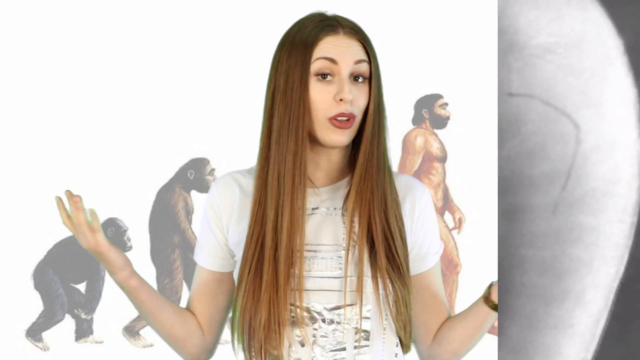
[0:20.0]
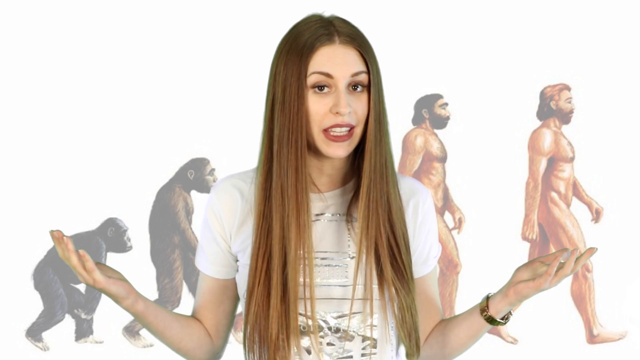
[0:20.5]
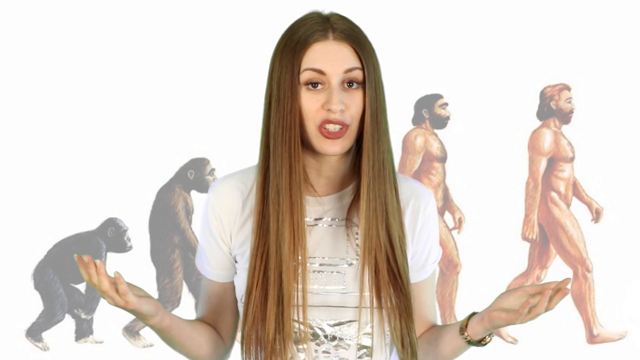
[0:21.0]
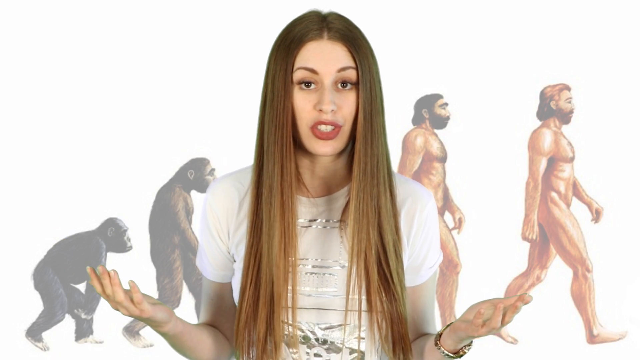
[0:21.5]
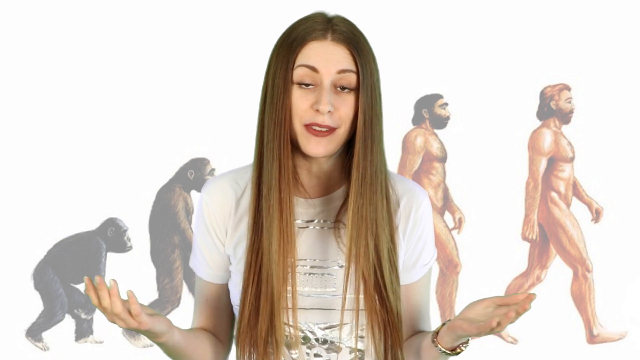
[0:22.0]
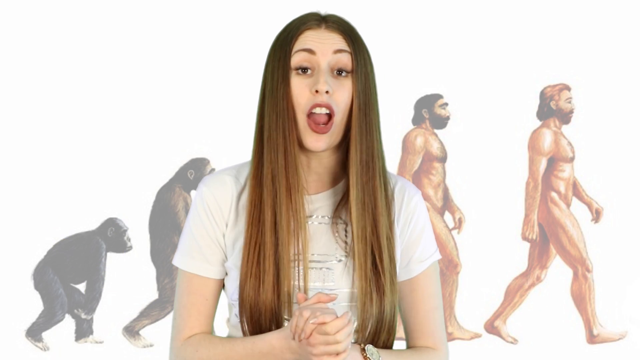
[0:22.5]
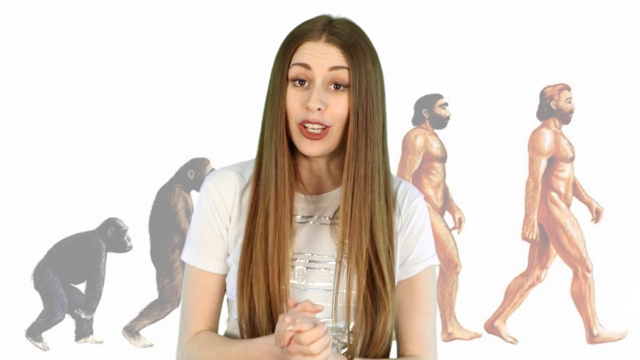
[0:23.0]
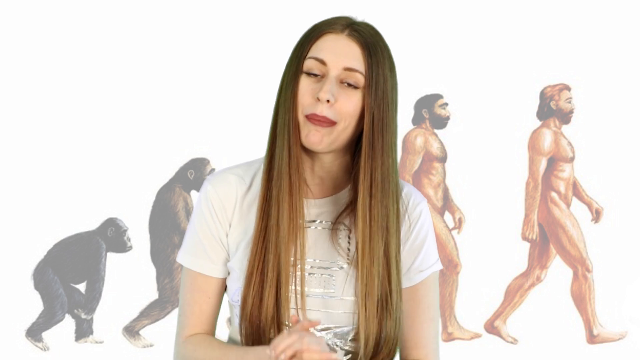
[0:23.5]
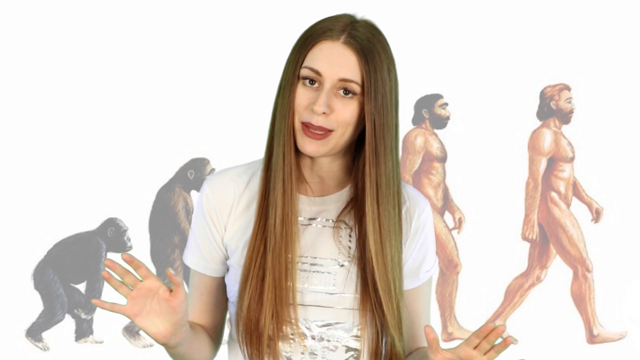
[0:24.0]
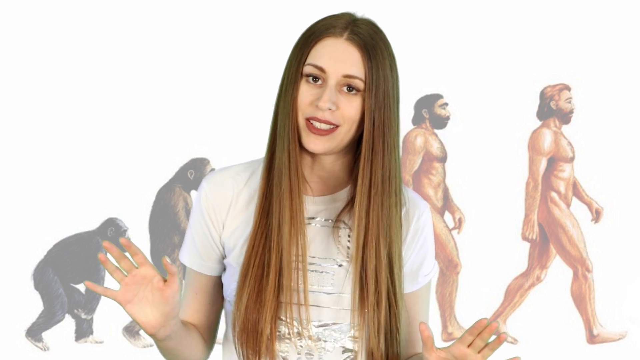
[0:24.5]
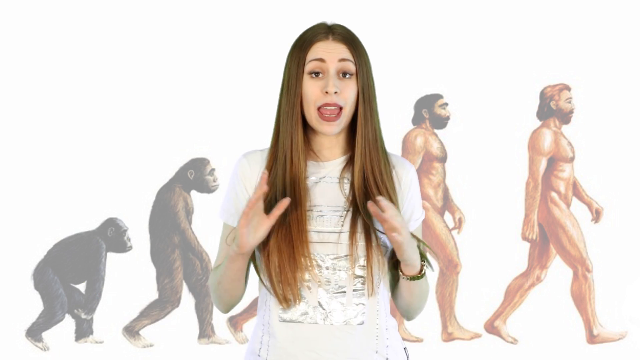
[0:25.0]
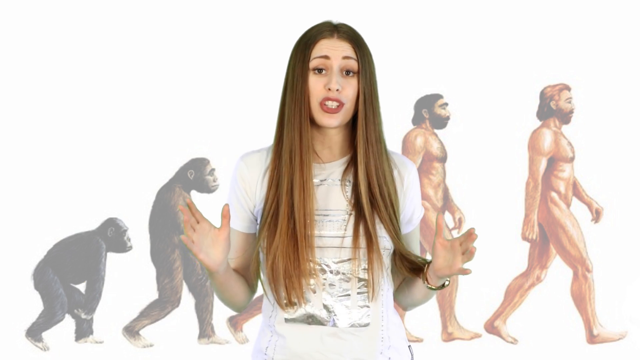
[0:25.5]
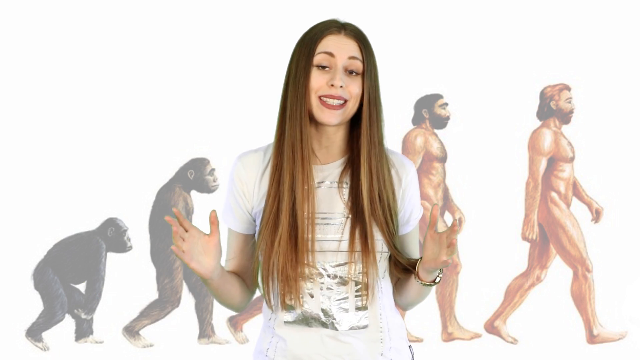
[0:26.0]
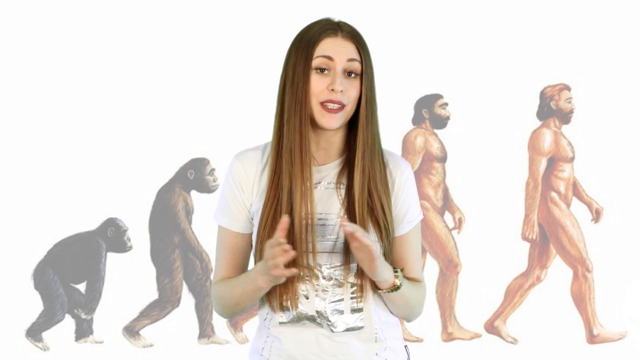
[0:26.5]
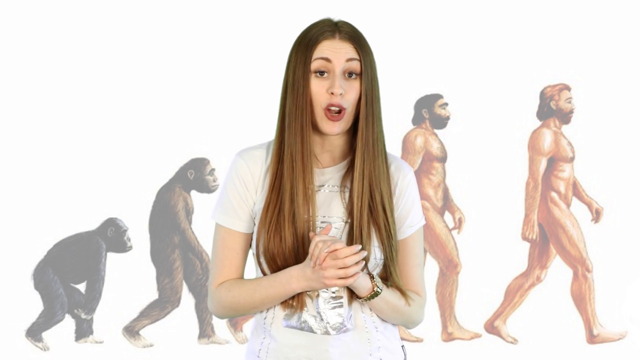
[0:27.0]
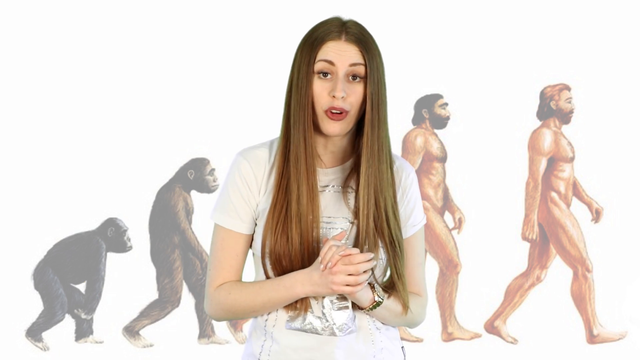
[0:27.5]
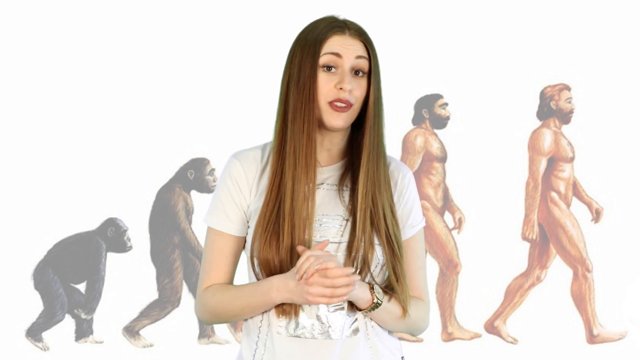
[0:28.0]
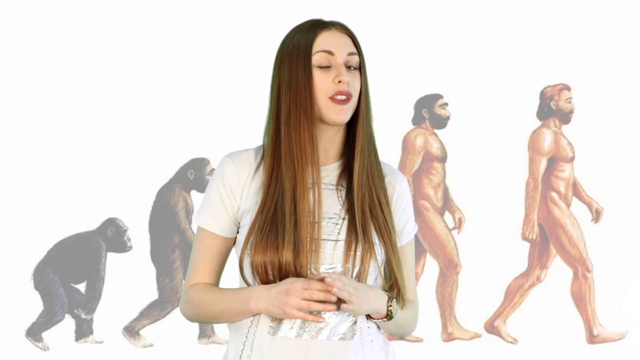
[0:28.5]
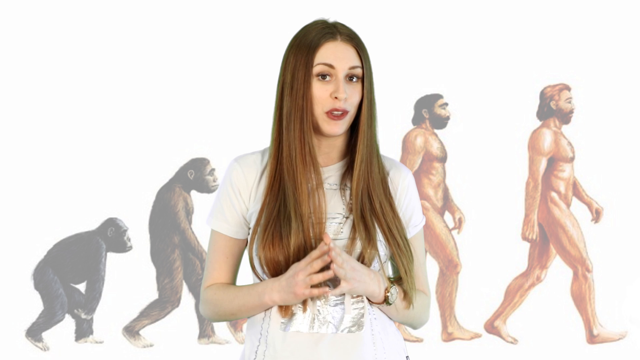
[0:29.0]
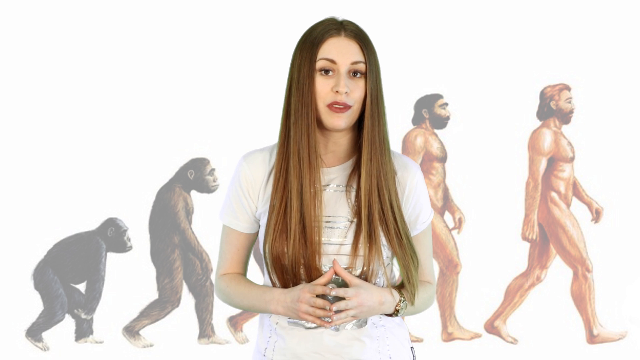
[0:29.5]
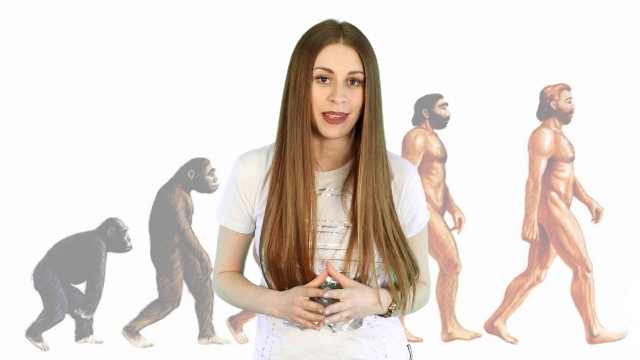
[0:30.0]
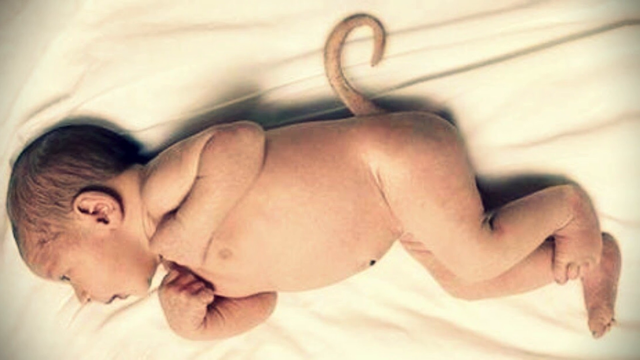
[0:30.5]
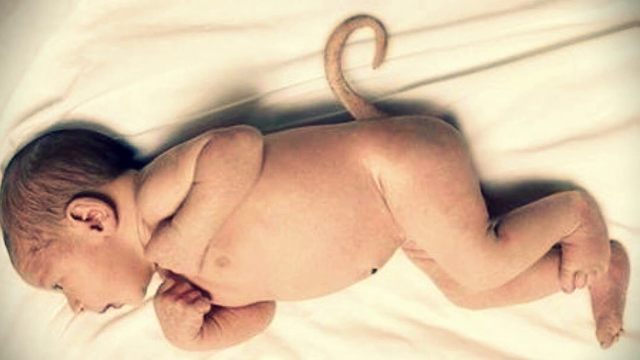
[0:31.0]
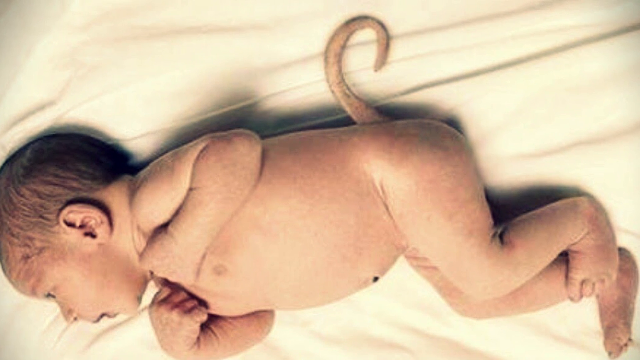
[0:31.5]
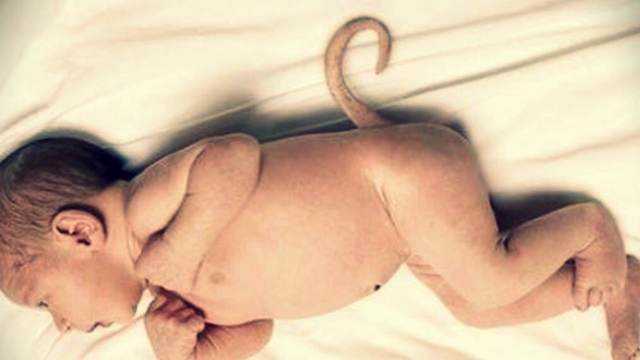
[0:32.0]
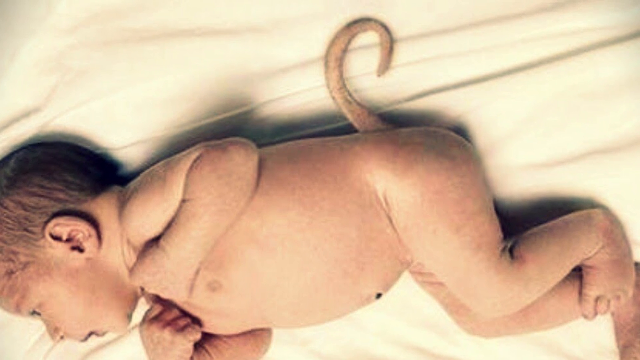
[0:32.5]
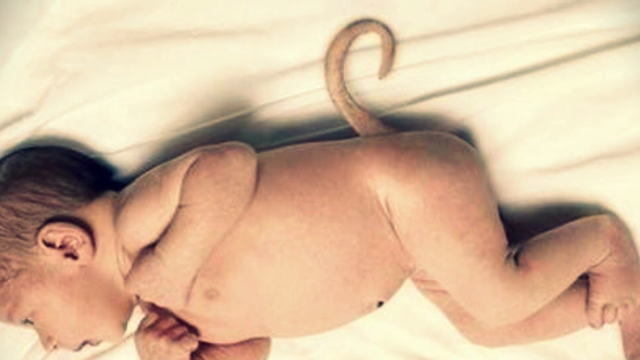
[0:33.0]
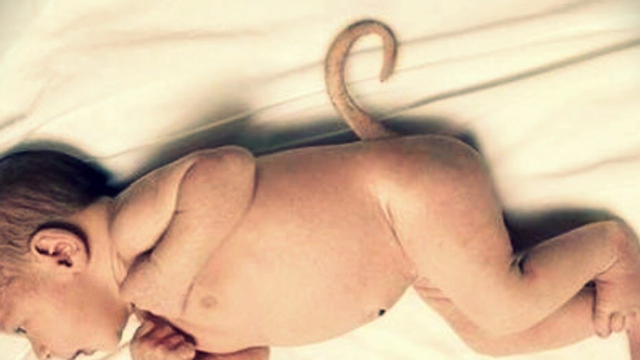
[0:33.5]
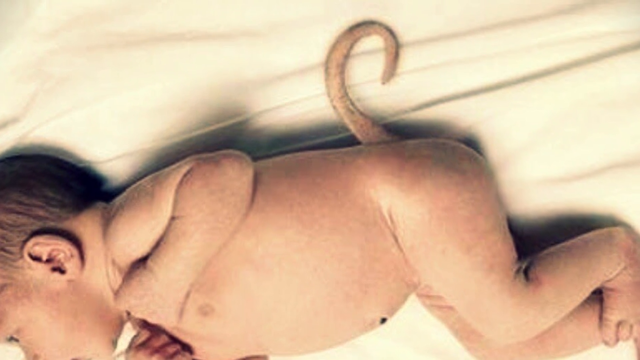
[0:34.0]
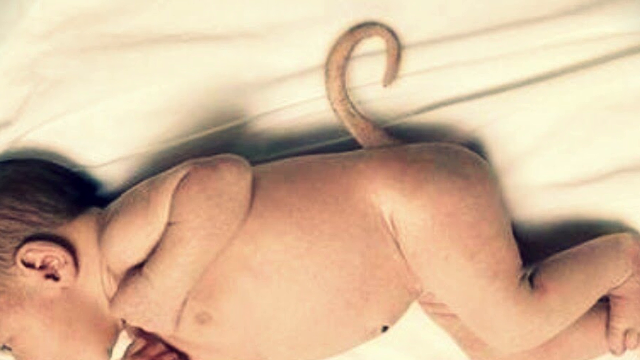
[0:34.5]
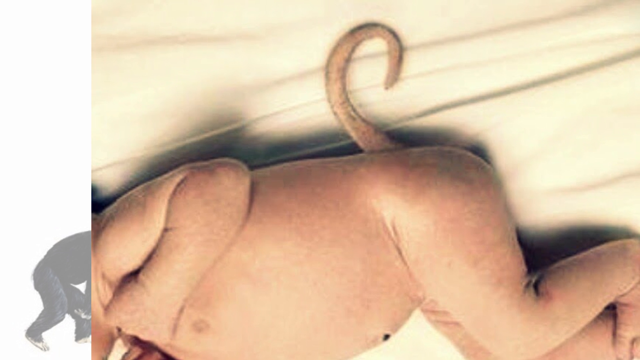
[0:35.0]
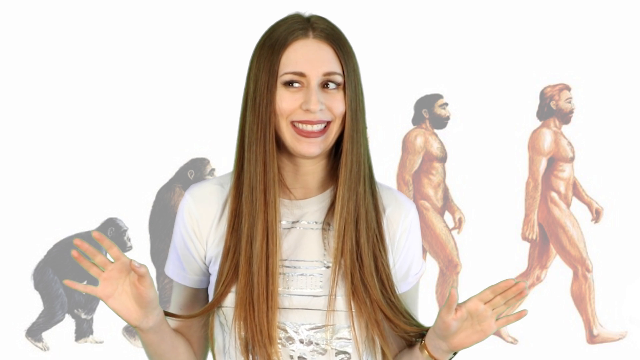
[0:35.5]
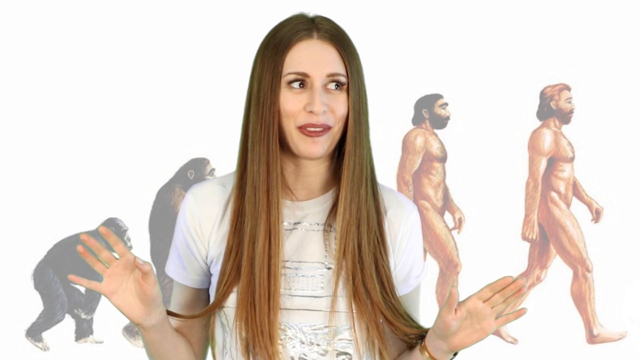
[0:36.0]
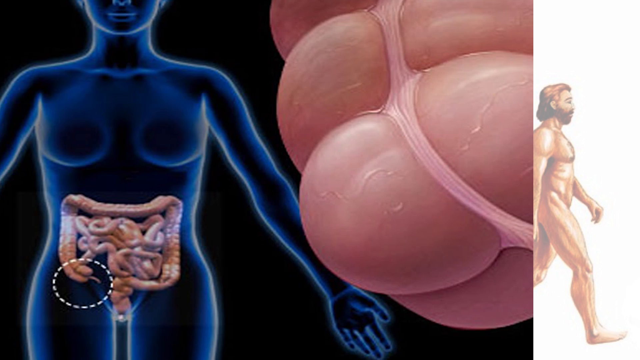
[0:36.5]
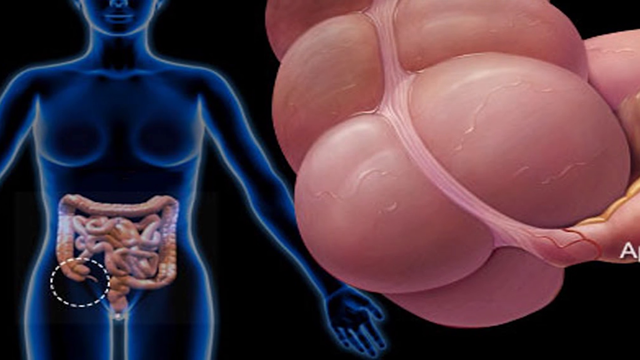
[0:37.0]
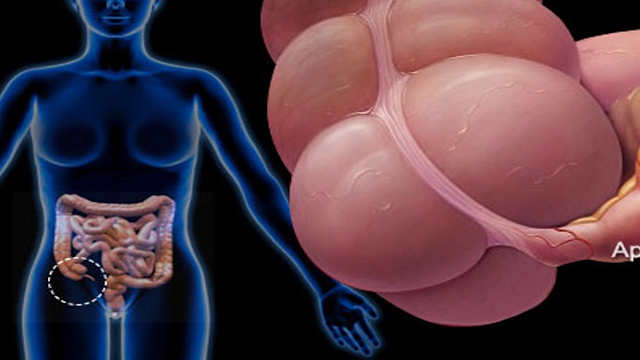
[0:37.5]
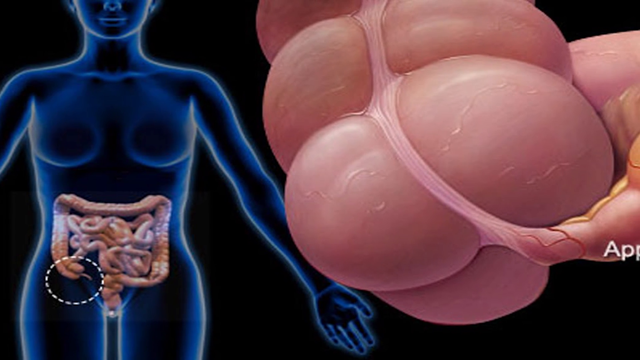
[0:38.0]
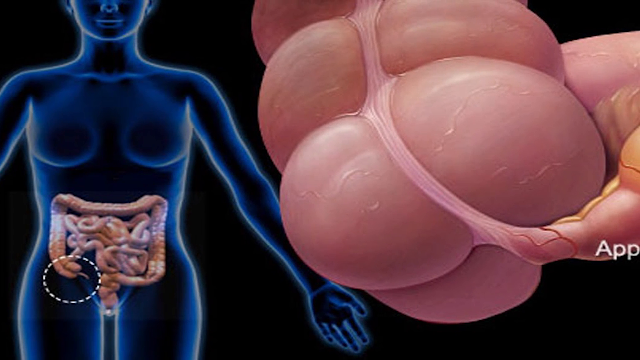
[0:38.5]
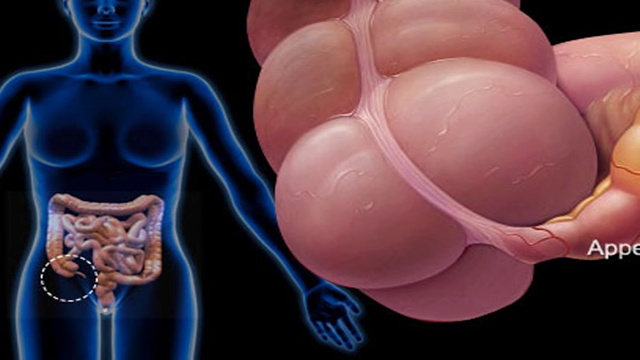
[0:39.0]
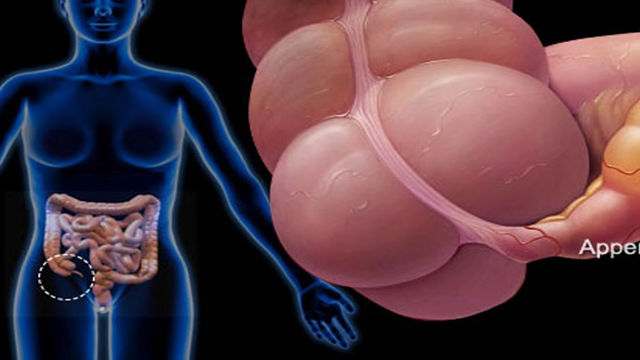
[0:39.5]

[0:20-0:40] Charlotte gestures with her arms, holding both arms at 45-degree angles above her with her palms outstretched. She continues to speak, clasping her hands together, pushing them outwards toward the camera, clasping them together again, and then placing the tips of her fingers against each other. An image of a baby with a curly tail on a cloth background is shown. The image swipes away from left to right and the screen returns to Charlotte, who looks left and right with wide eyes, seemingly questioning the image she just presented. Then an image of the appendix in a human against a black background is shown.